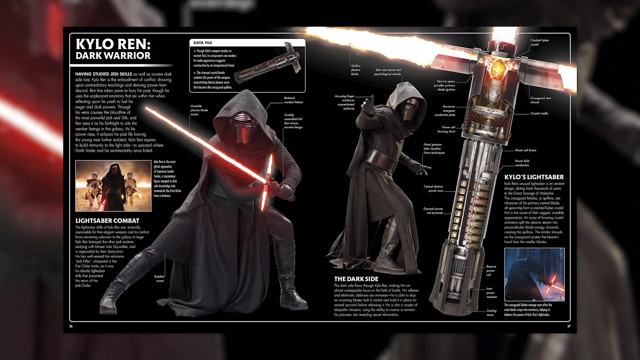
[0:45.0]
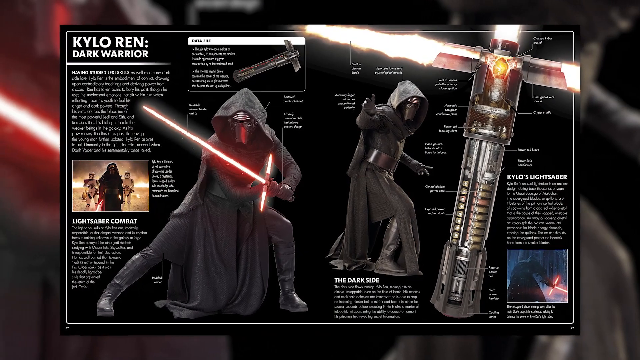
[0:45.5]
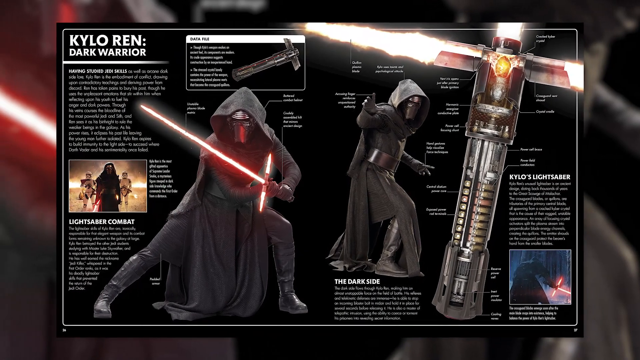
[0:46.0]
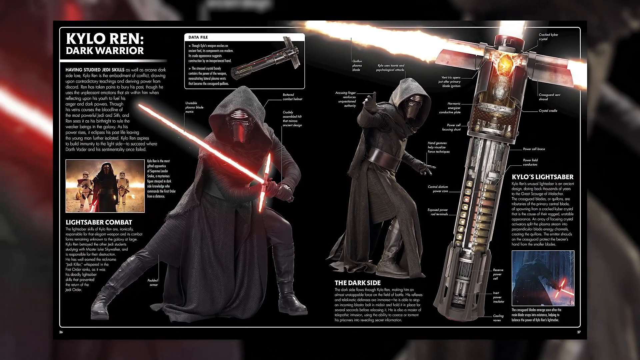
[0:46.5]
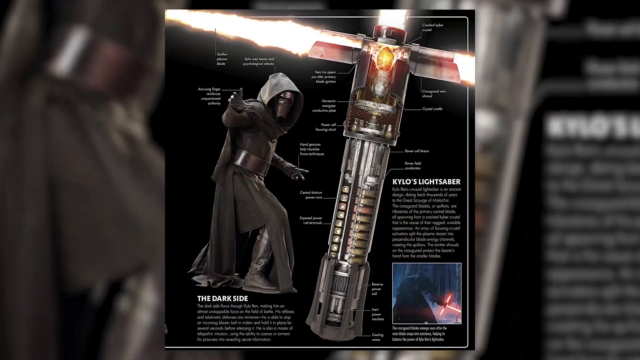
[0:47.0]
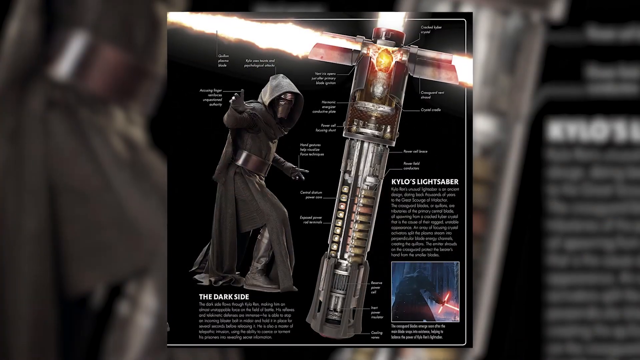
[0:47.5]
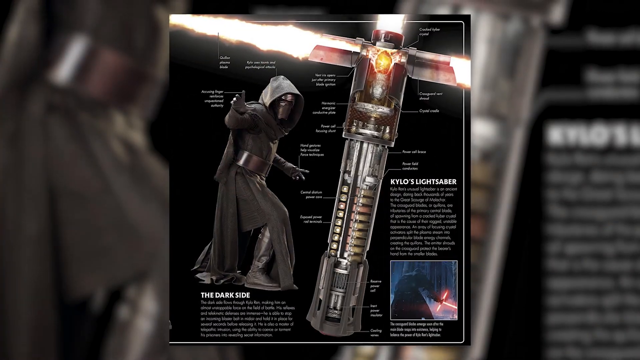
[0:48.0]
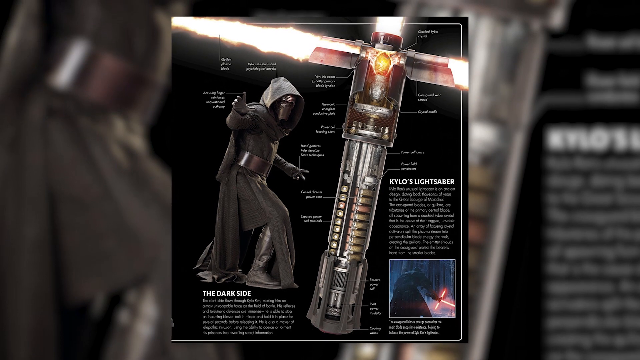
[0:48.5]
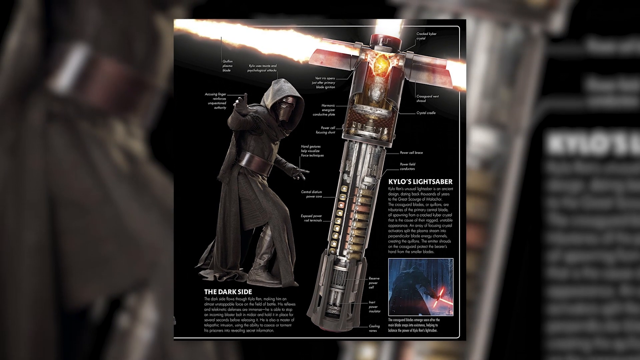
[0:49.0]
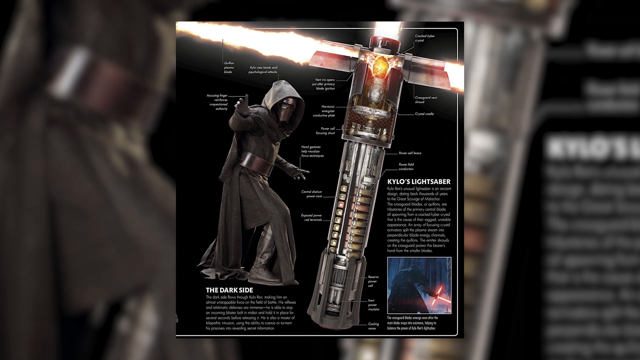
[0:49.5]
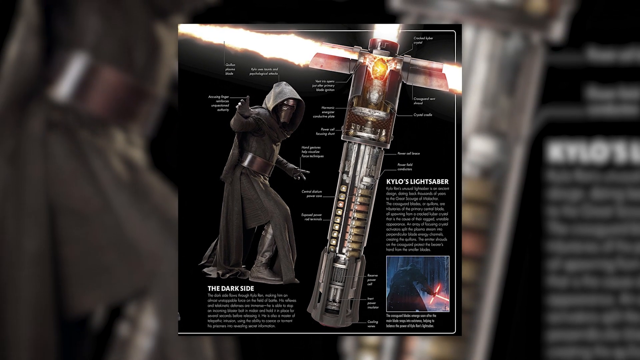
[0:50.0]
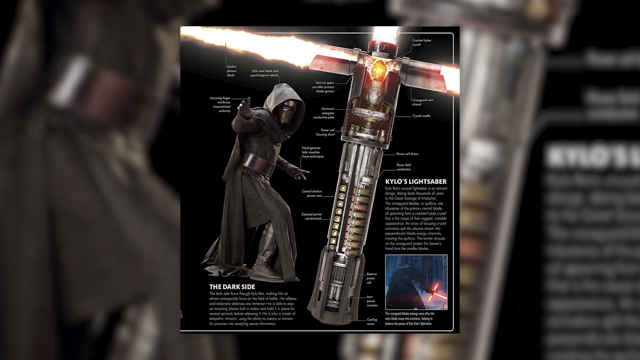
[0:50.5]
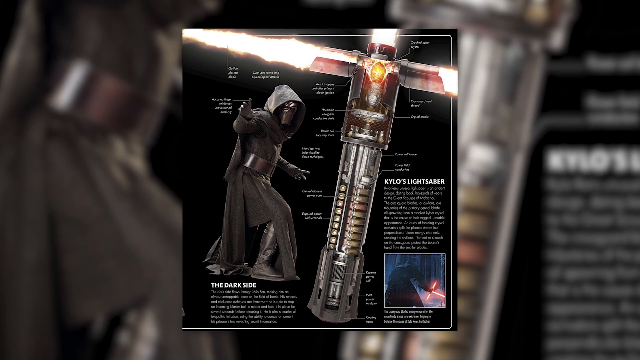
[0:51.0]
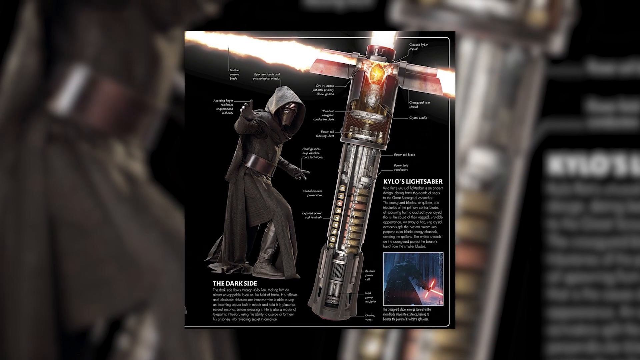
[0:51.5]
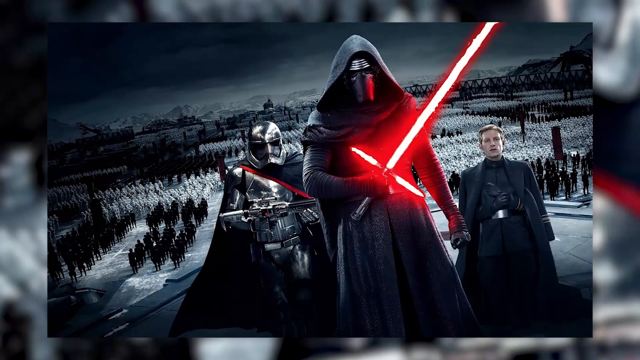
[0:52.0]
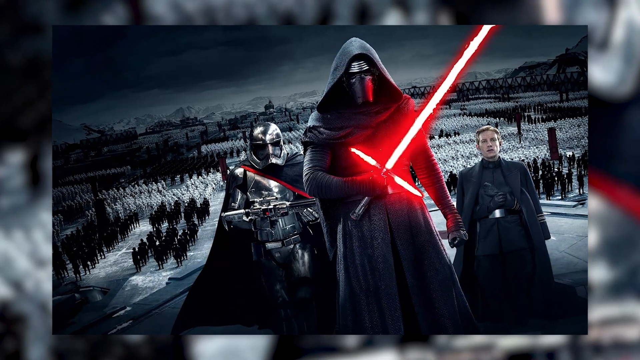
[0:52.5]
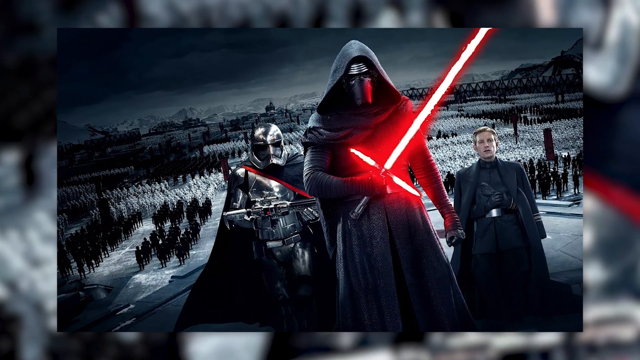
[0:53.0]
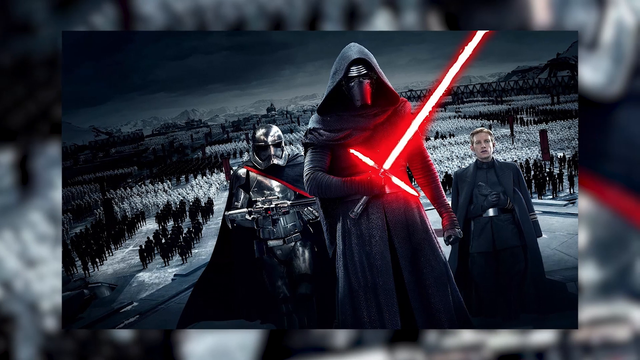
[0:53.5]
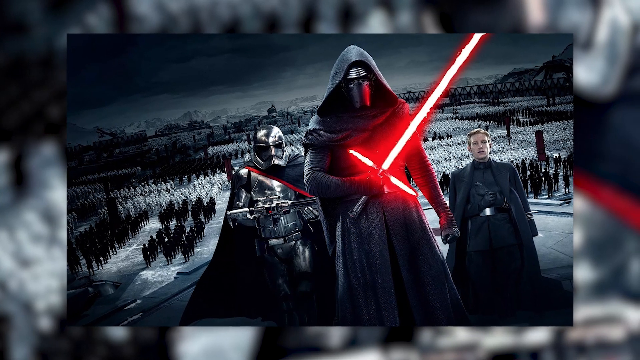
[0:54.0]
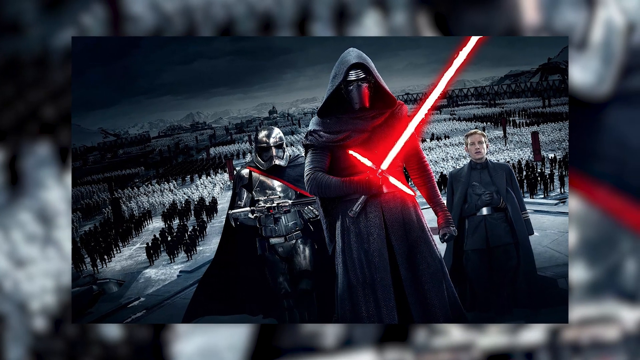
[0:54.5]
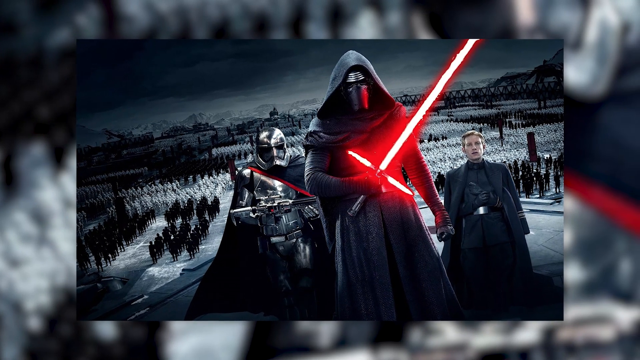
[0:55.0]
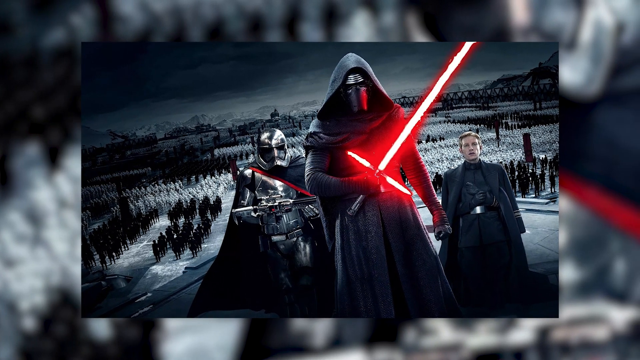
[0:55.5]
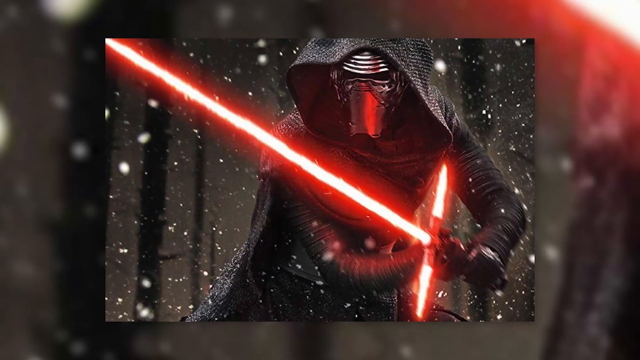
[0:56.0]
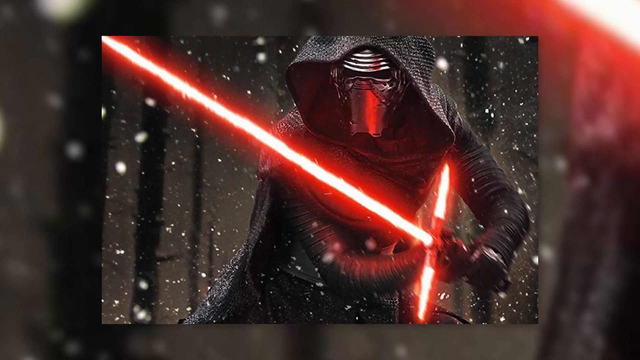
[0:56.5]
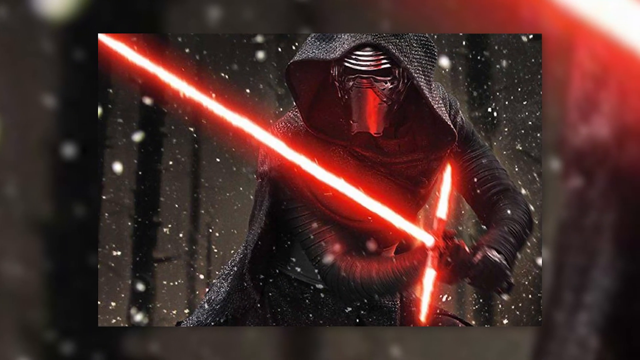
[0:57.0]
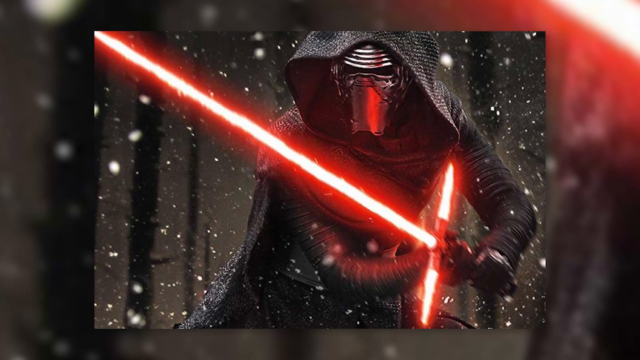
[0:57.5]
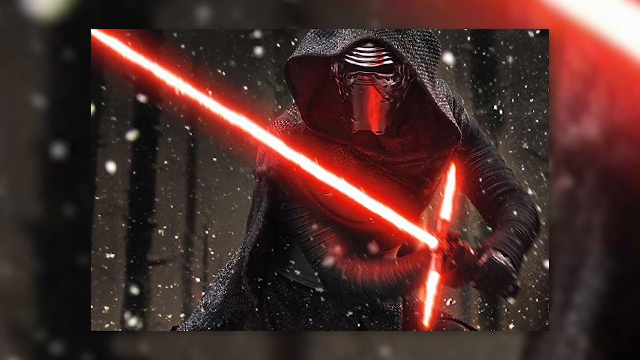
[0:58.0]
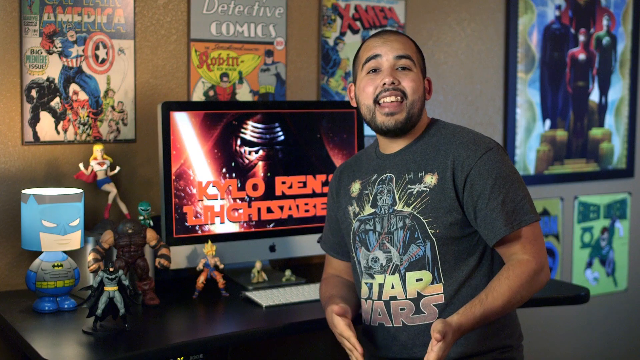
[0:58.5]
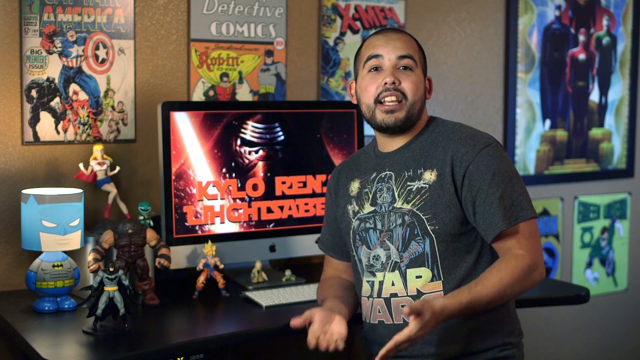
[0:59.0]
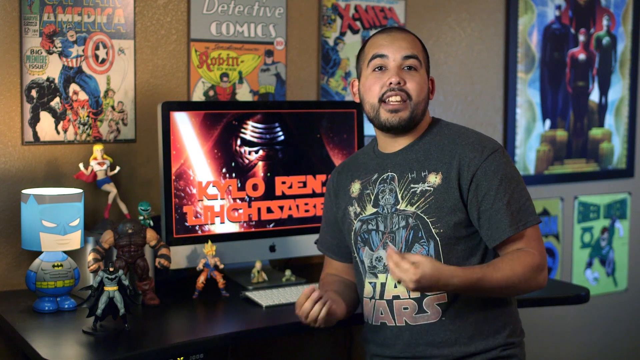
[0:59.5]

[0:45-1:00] The YouTube video is titled "How Kylo Ren's Lightsaber Works" and was uploaded by Variant Comics, as indicated by the banner in the top left: a blue-filled circle with a blue shield outlined in white and a white V inside. The background image shows Kylo Ren in hood and mask holding a red lightsaber, with text in a stylized Star Wars-style font reading "Kylo Ren's Lightsaber." Pages from what appears to be a Star Wars encyclopedia are shown, including images of Kylo Ren with his followers against a dark snowy background, holding his illuminated lightsaber. The encyclopedia pages have a dark black background and white lettering. The host appears to be a Hispanic man with short cropped black hair and brown skin, wearing a black Star Wars shirt with Darth Vader on it. He is in what appears to be a home office, with an Apple computer behind him and enlarged, framed comic book covers on the walls behind him.